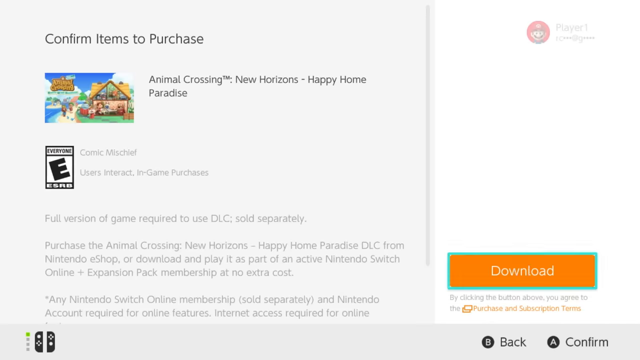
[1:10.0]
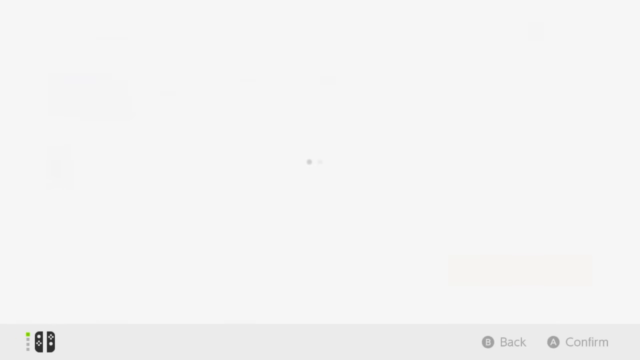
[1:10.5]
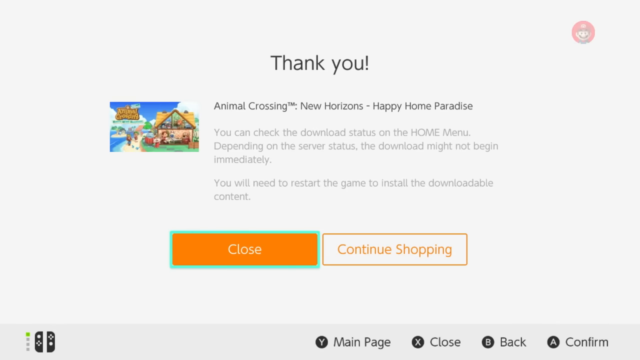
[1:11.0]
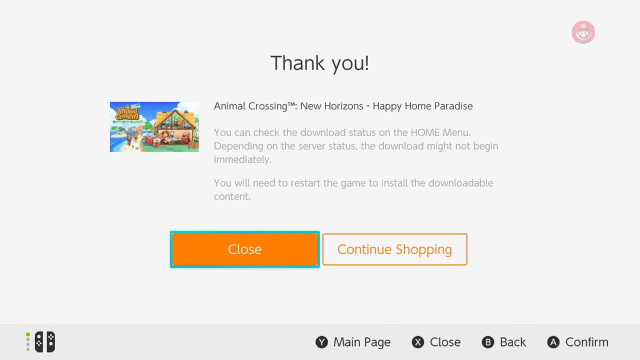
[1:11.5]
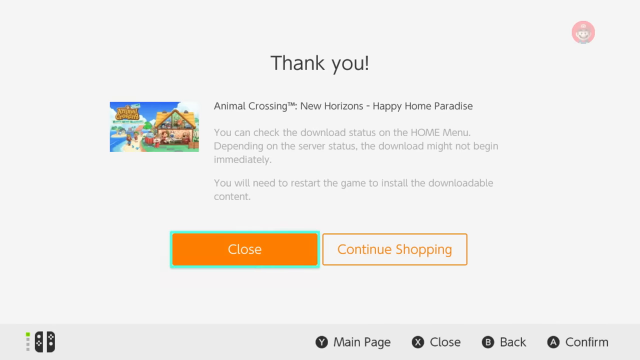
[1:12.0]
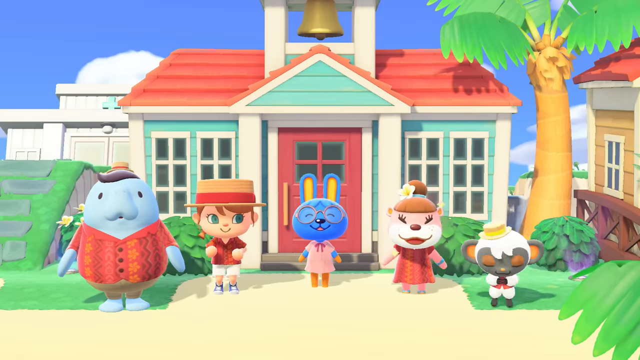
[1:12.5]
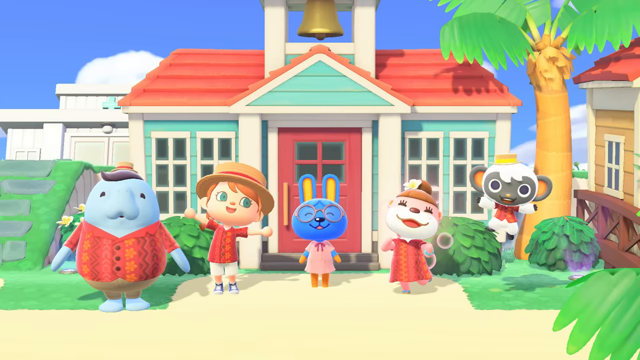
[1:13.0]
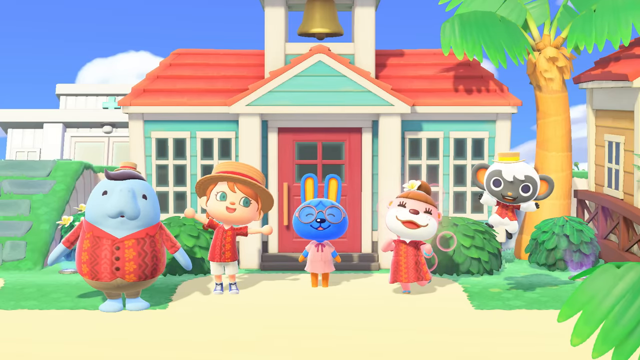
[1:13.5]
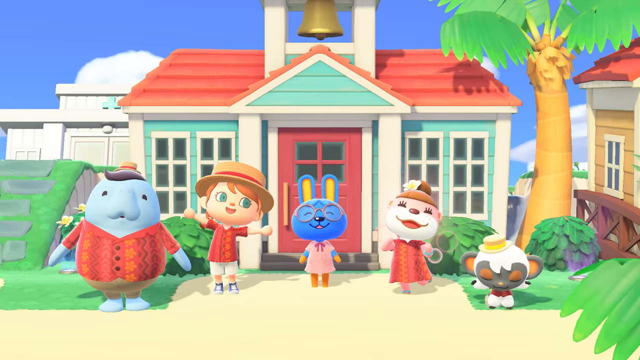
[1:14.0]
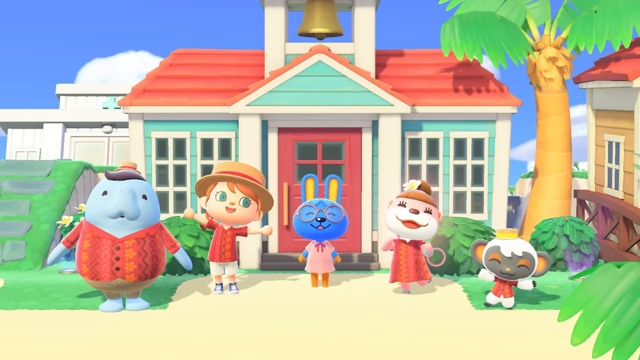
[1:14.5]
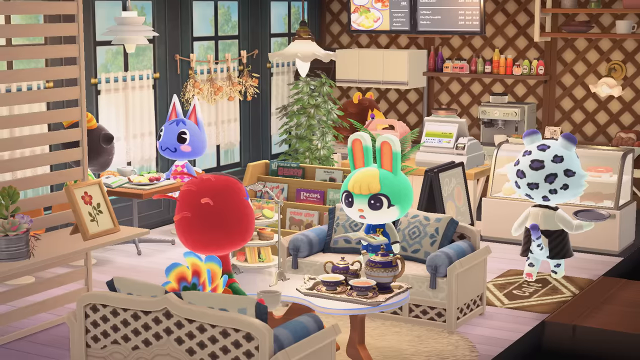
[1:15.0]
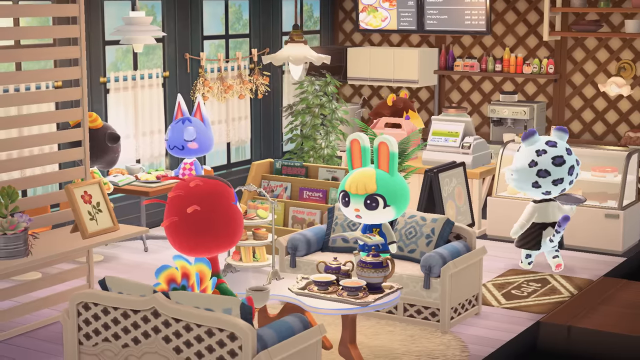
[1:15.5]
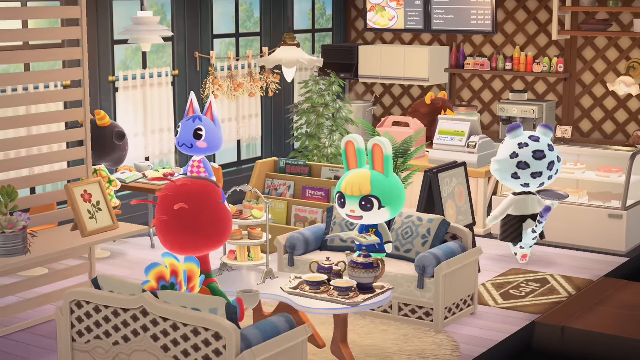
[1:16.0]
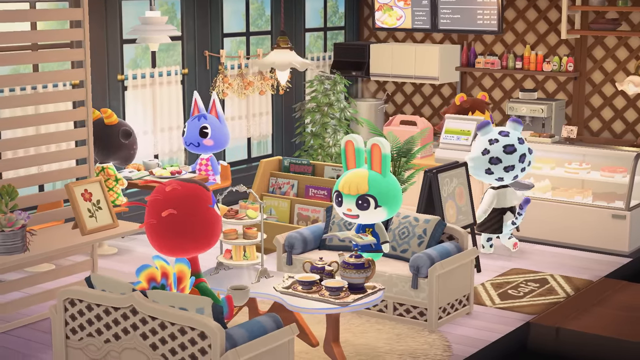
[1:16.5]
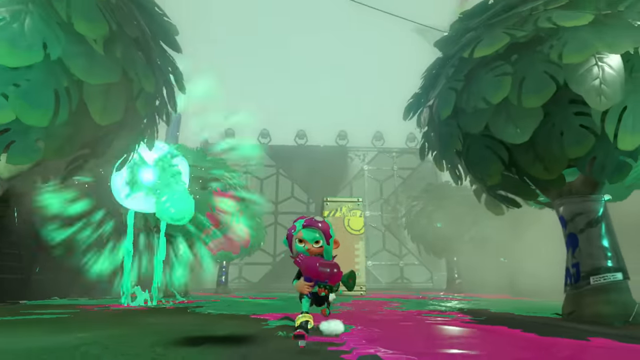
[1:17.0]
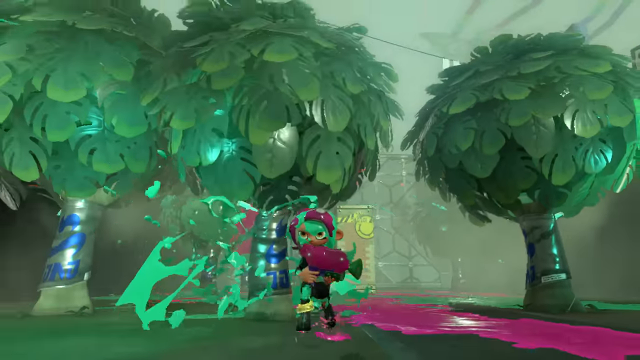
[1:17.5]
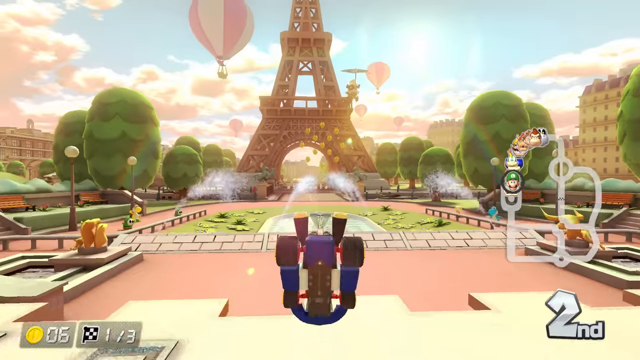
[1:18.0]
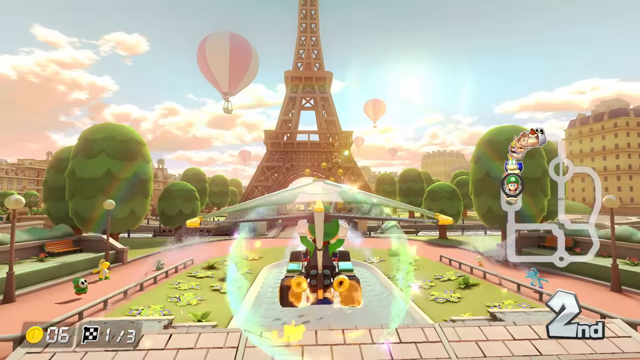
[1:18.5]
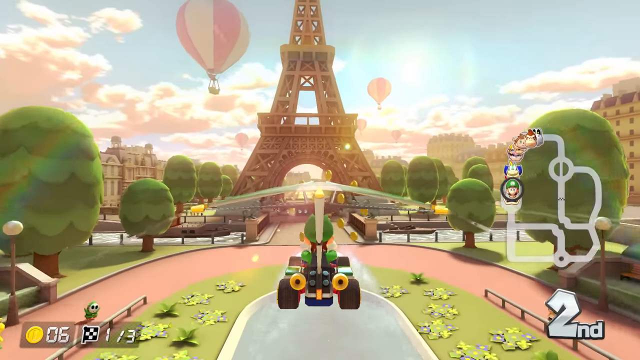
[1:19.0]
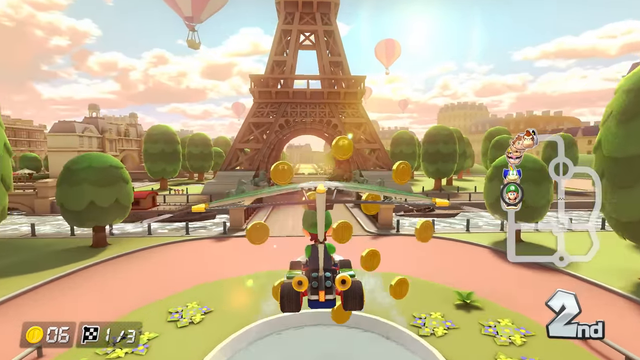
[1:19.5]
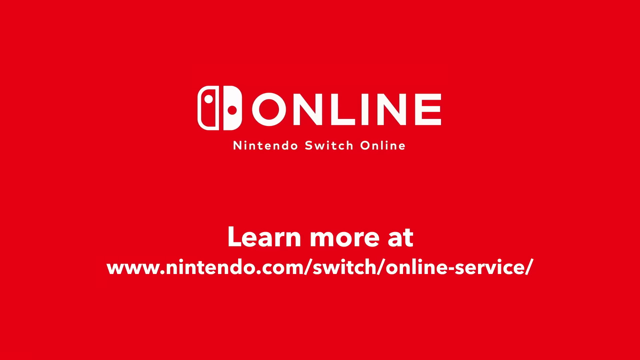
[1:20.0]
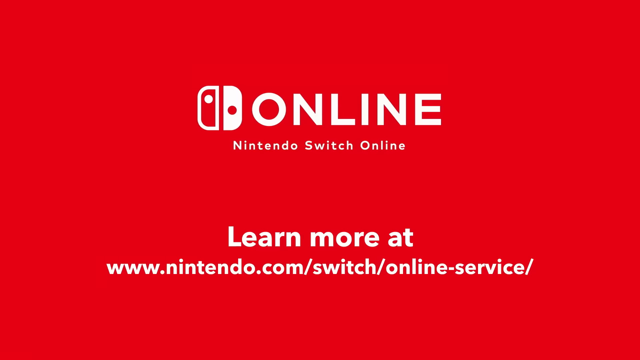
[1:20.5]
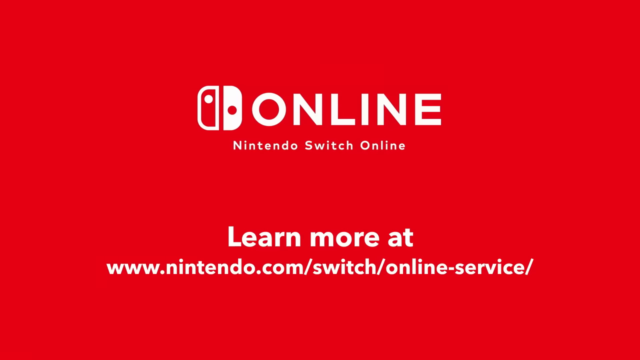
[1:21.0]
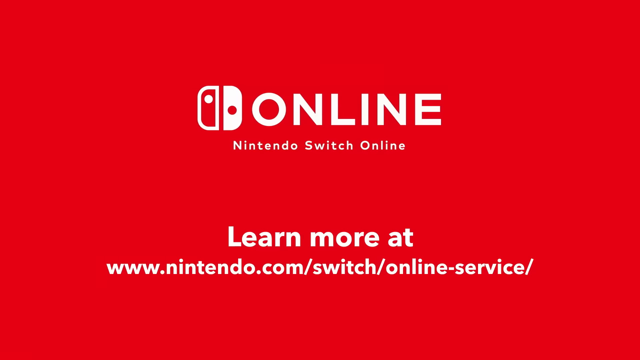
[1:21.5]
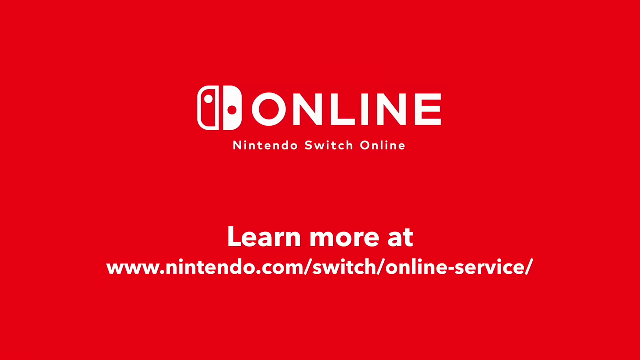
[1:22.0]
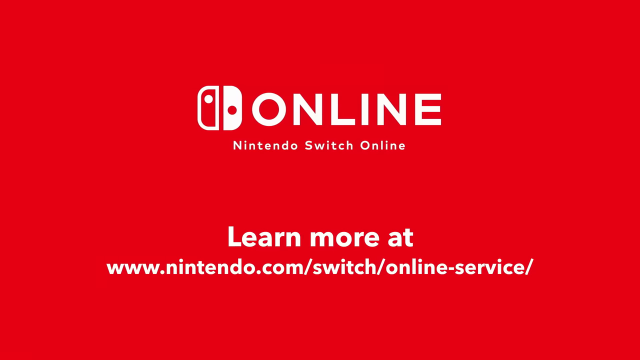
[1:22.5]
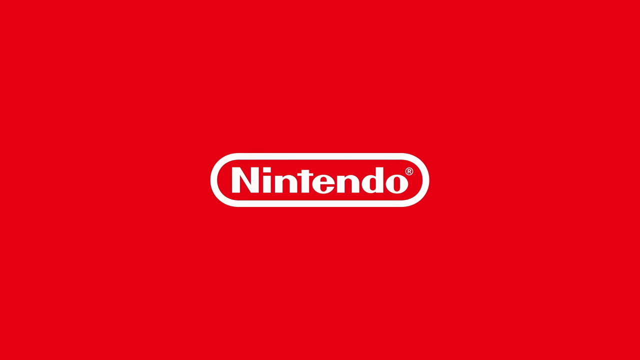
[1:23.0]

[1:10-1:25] The video is for the Nintendo store. Brightly colored characters pop up in front of what looks like a schoolhouse: a blue character wearing a shirt, a child-like character wearing a red shirt and a hat, a bunny-like character, and what looks like a monkey character. They are standing in front of the schoolhouse under a blue sky with clouds, and there is a palm tree. The game is shown being played along with its different features. Nintendo Online is then shown, with Luigi riding through on Mario Kart in what looks like Paris, with the Eiffel Tower visible. Text reads "learn more at Nintendo.com/switch online service." The video cycles back to the red menu, which says "Nintendo confirm purchase for Animal Crossing New Horizons Happy Home Paradise" with an orange download button. It looks like the purchase has been made.